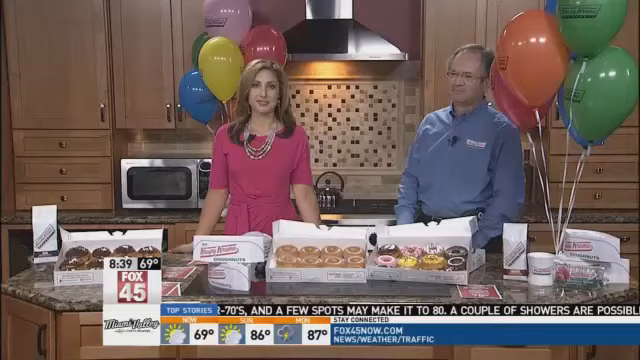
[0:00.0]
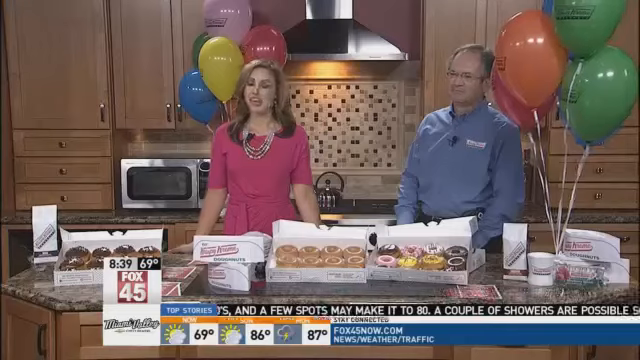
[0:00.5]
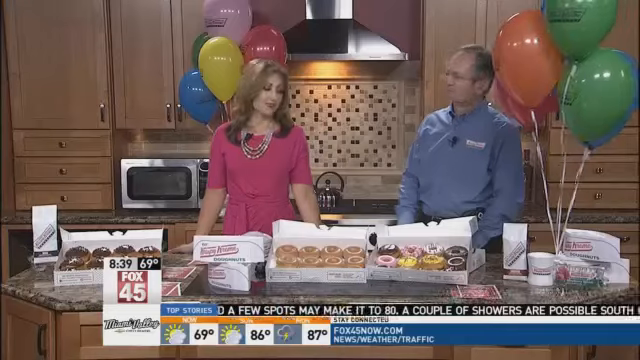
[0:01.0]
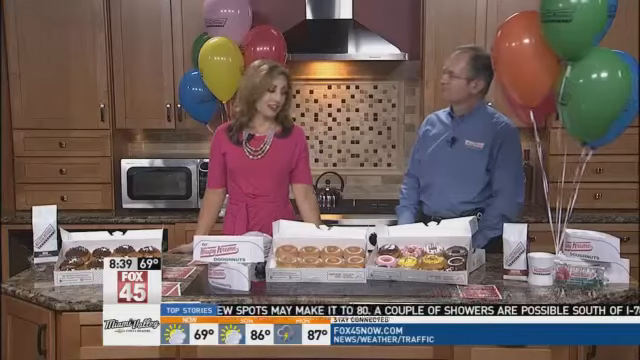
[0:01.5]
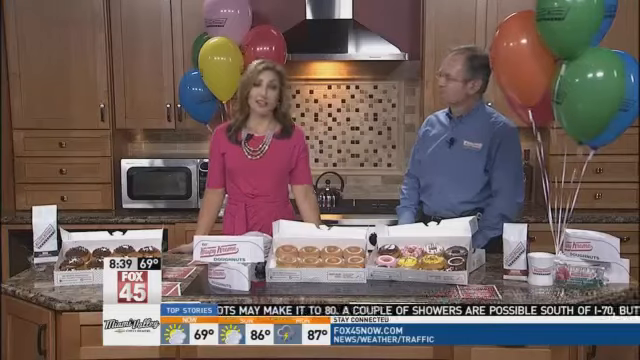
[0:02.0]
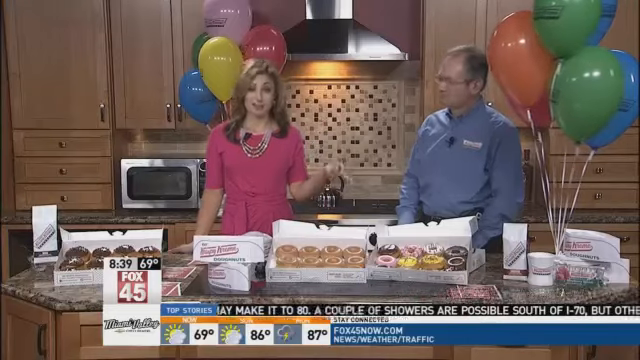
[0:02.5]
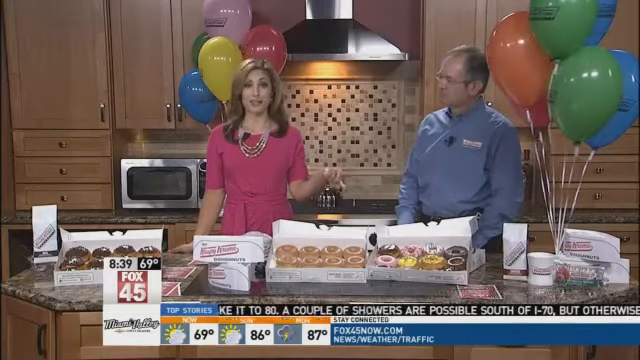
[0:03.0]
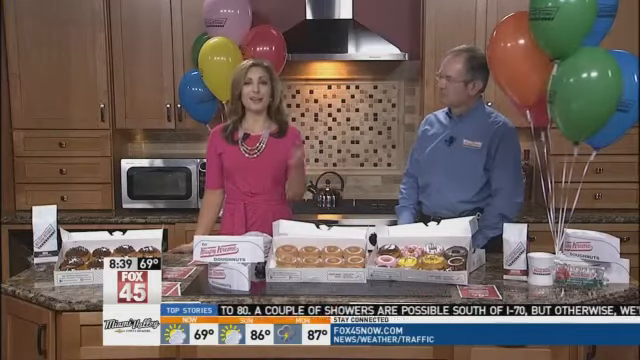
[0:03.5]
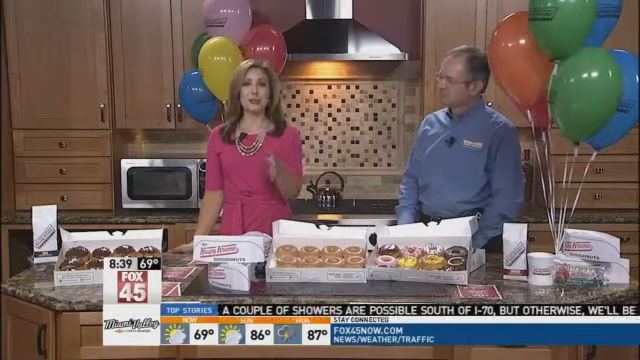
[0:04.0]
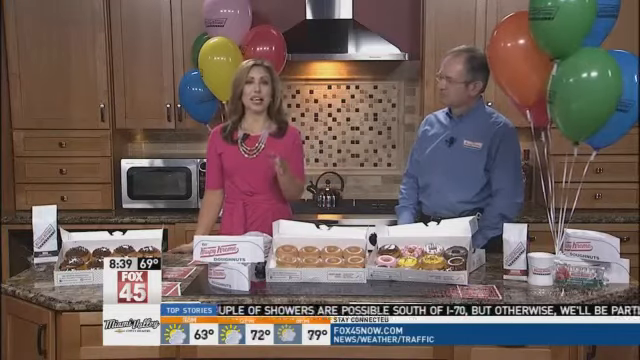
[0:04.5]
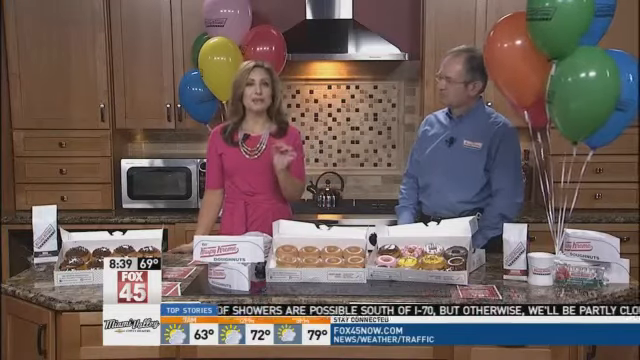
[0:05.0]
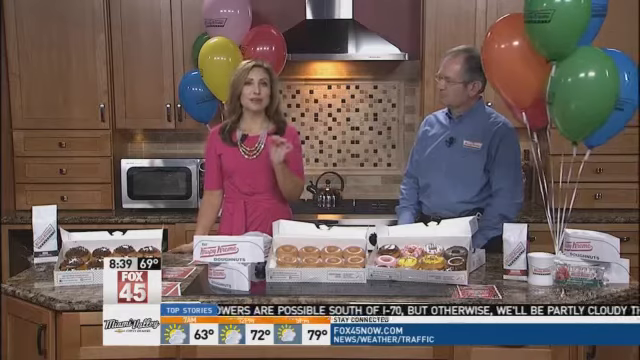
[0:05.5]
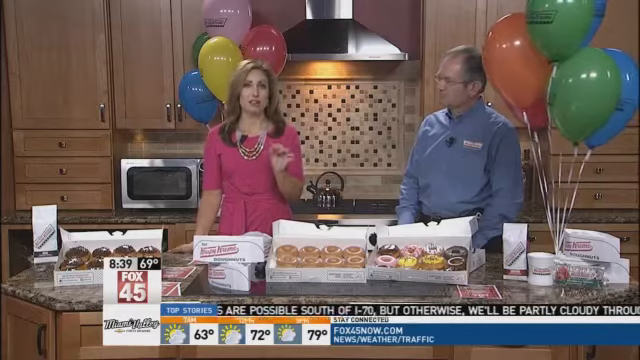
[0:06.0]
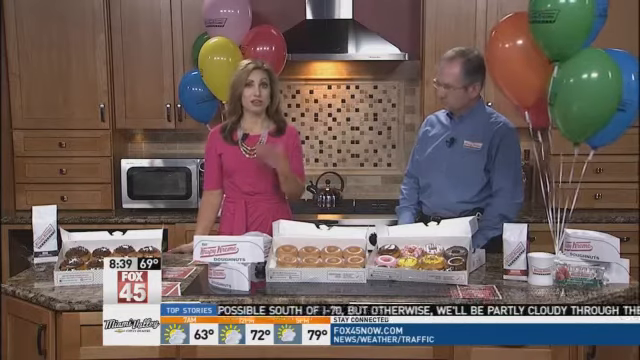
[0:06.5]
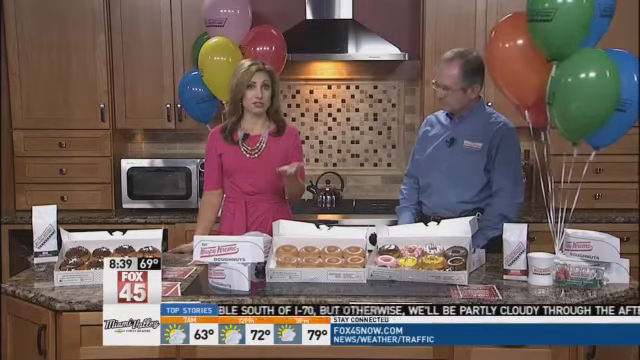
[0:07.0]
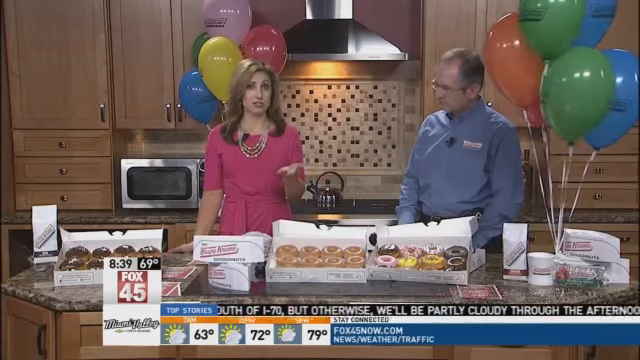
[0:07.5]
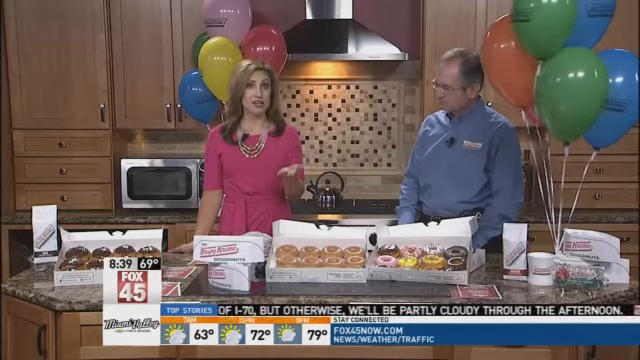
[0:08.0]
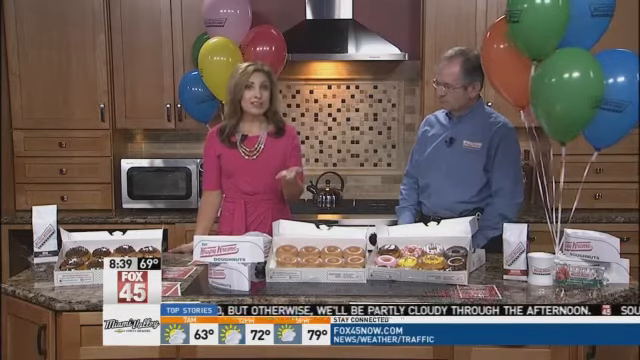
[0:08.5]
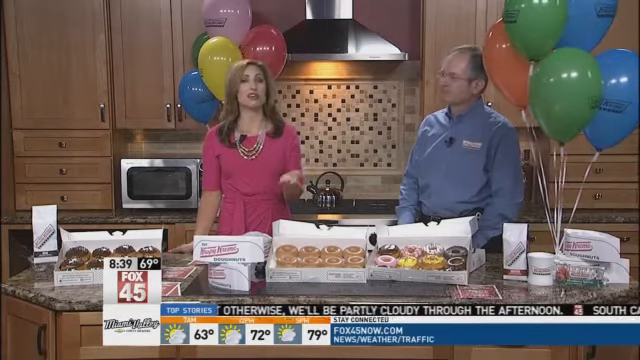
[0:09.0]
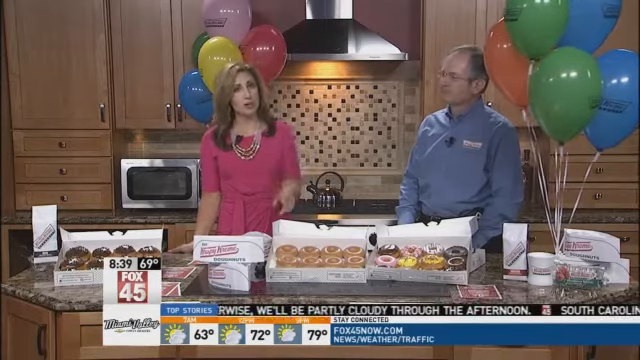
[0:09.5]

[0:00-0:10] Two people stand in a kitchen area in front of a large countertop island. Behind them are many multicolored balloons, and on the counter in front of them are at least three full-sized boxes of Krispy Kreme doughnuts with different kinds of glazes; some look like they might be cream-filled. A man and a woman stand at the counter. The woman wears a business-type dark fuchsia dress with a long beaded necklace, and her brown hair falls a little past her shoulders. The man looks to be maybe in his fifties; he wears a blue button-up dress shirt and glasses and has thinning hair. It is a newscast, and the woman might be the news reporter and the man a guest, though this is unclear. She makes direct eye contact with the camera while nodding, gestures a lot with fairly large movements of her left hand, and raises her eyebrows for emphasis. She seems to be exaggerating a little, moving her head in a sort of dramatic way, as if to say "can you believe this?"